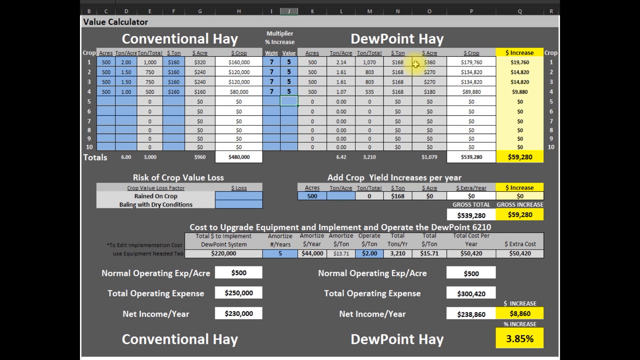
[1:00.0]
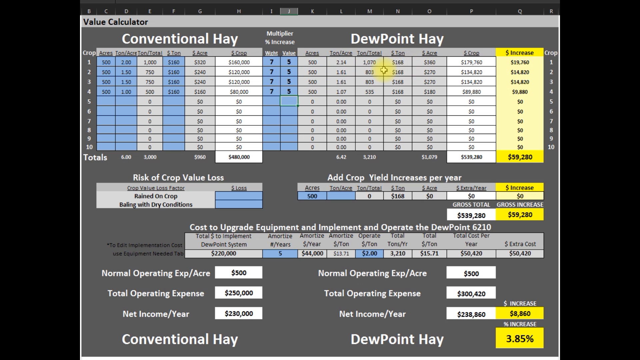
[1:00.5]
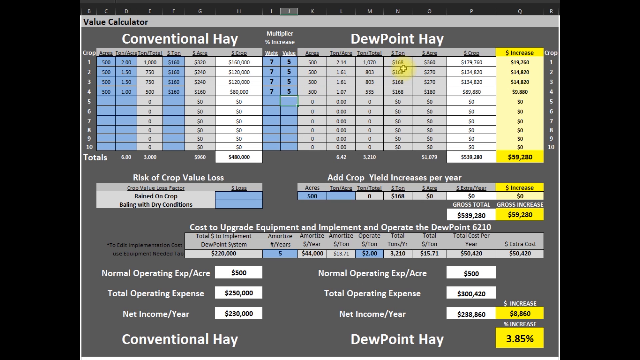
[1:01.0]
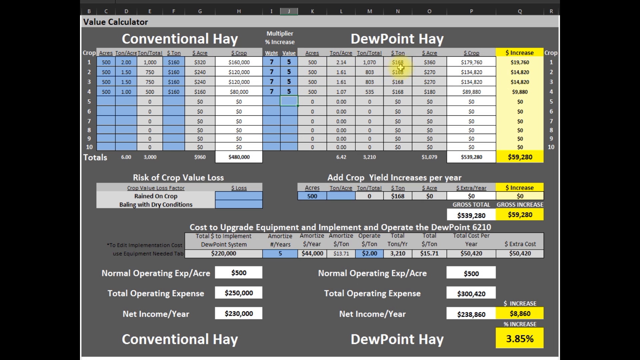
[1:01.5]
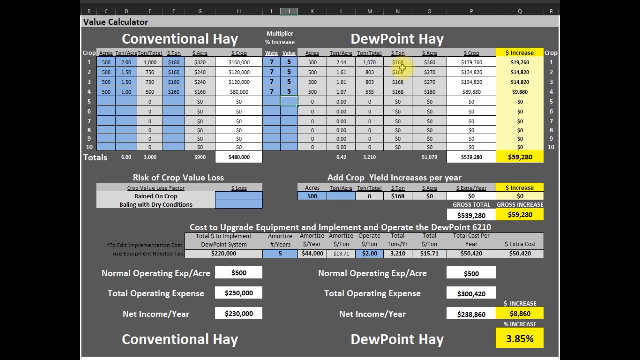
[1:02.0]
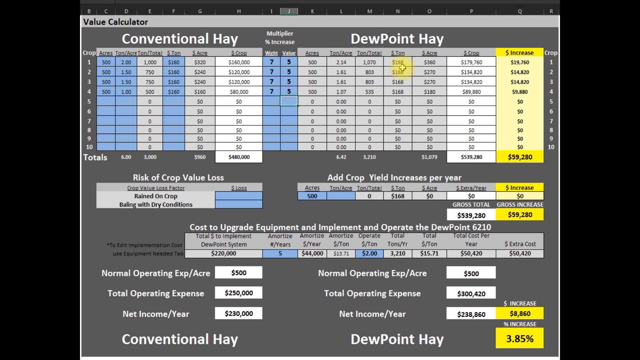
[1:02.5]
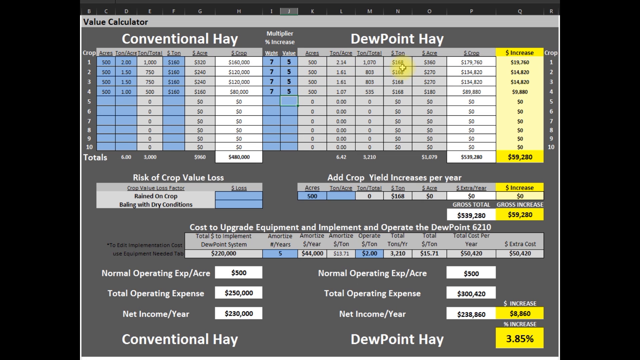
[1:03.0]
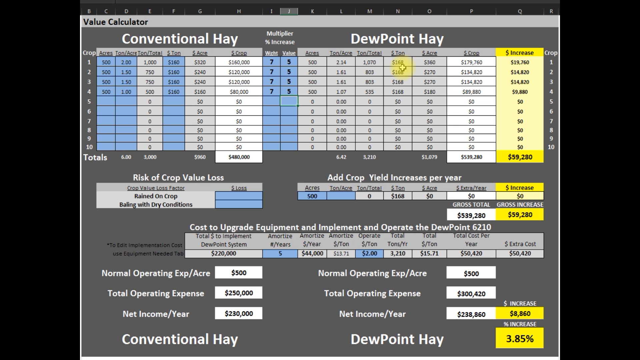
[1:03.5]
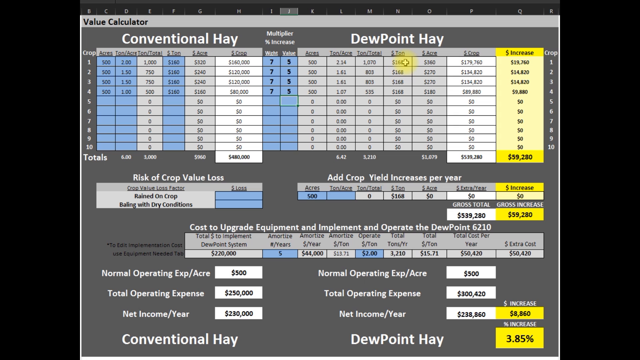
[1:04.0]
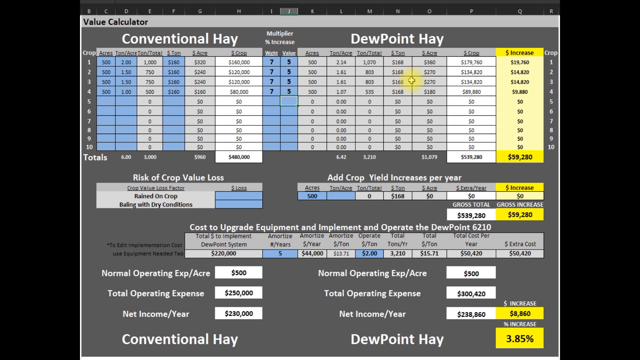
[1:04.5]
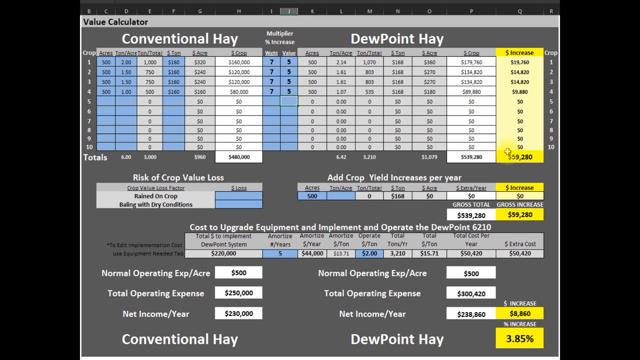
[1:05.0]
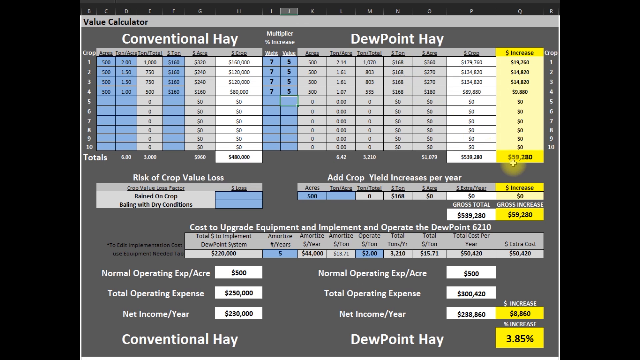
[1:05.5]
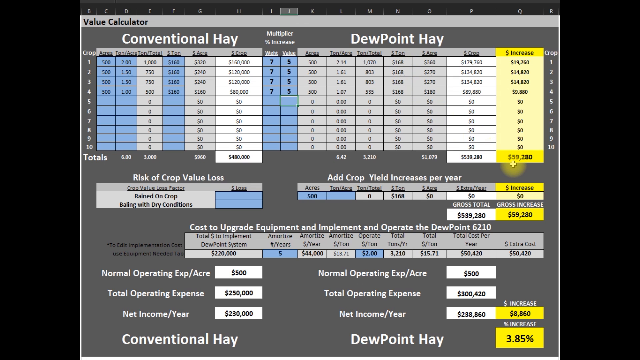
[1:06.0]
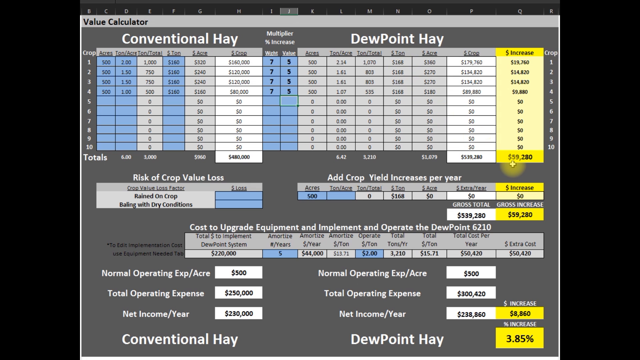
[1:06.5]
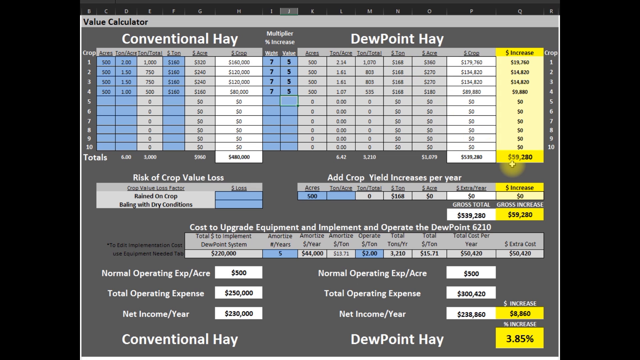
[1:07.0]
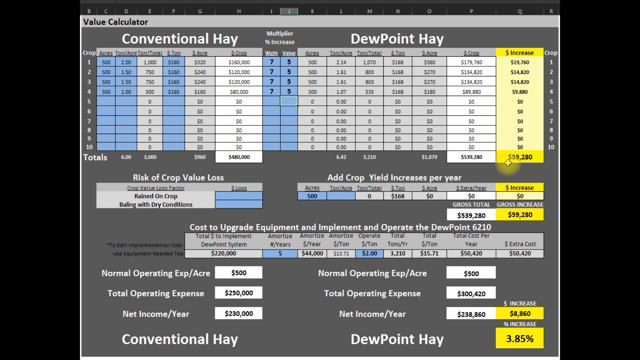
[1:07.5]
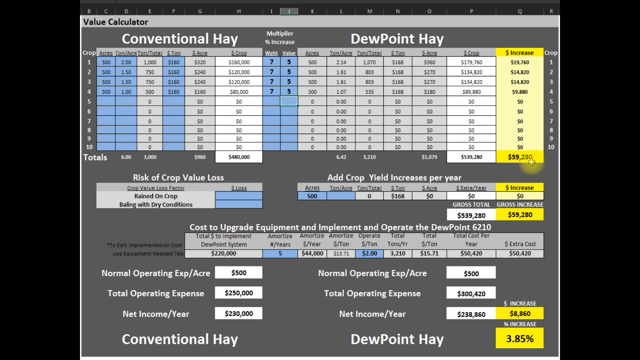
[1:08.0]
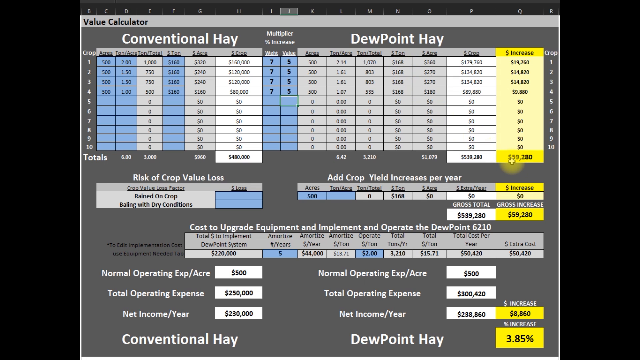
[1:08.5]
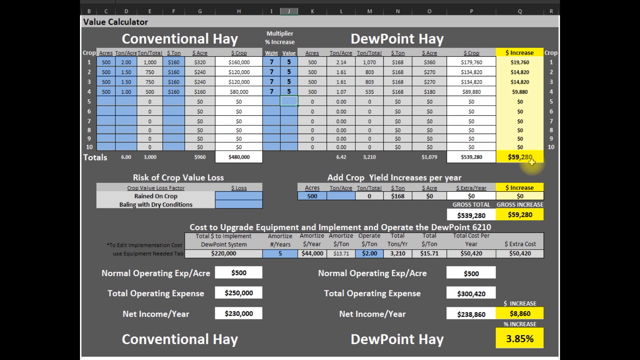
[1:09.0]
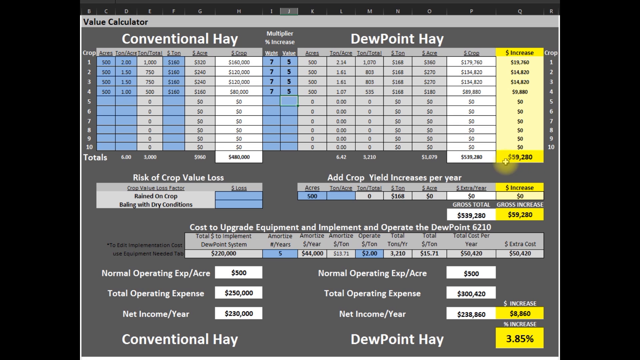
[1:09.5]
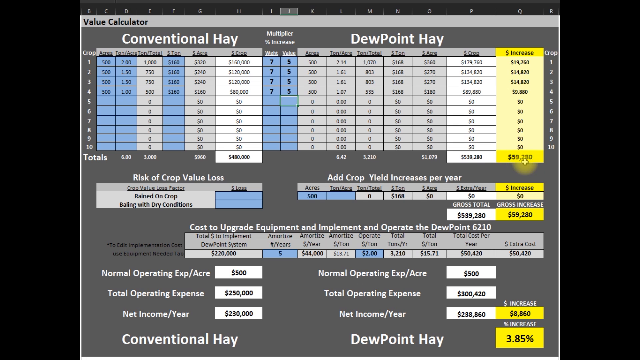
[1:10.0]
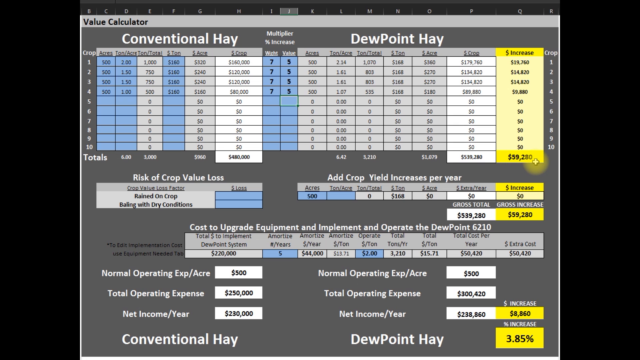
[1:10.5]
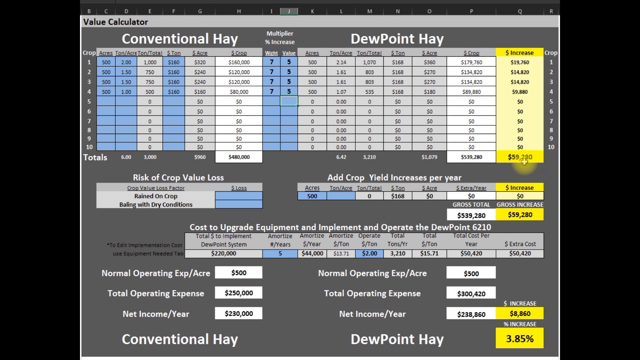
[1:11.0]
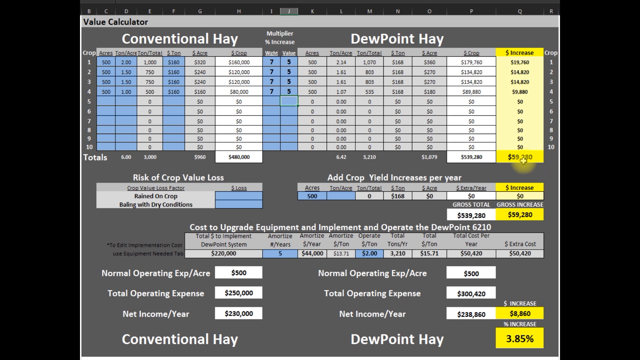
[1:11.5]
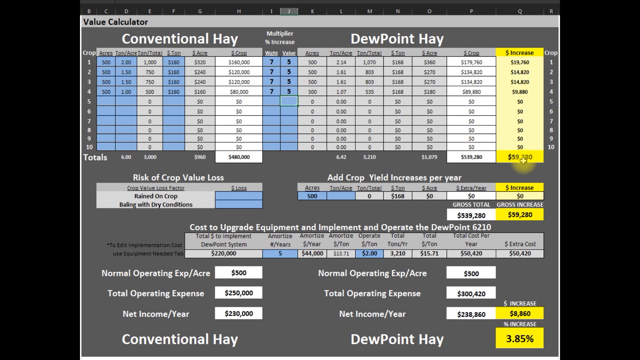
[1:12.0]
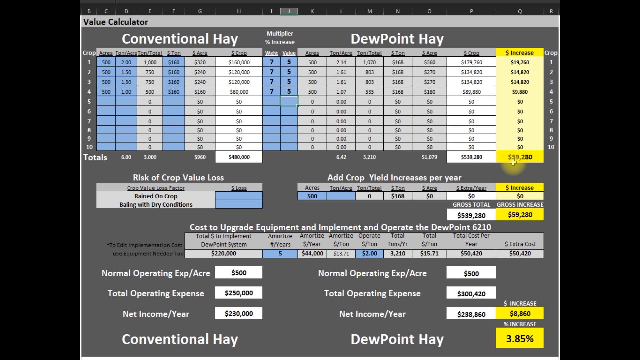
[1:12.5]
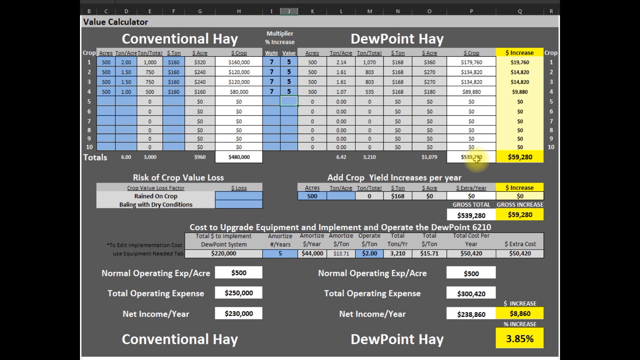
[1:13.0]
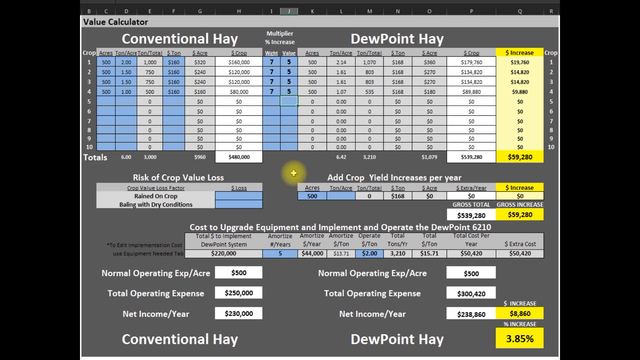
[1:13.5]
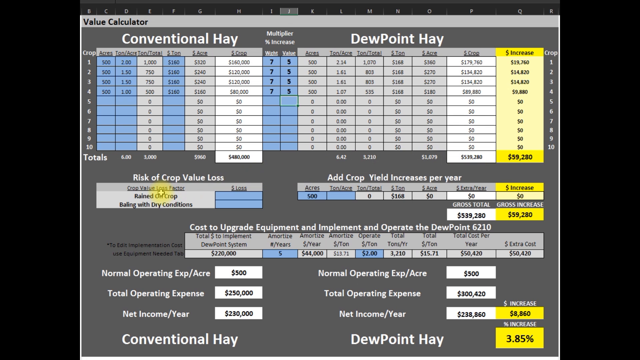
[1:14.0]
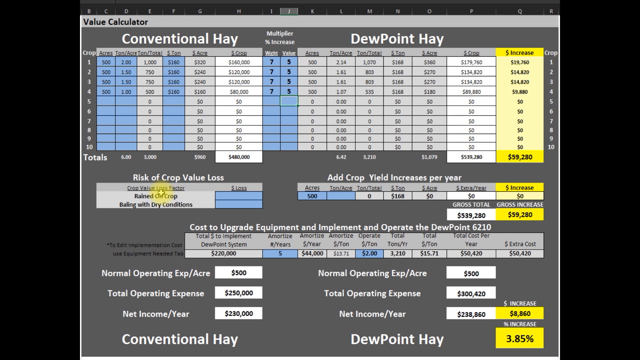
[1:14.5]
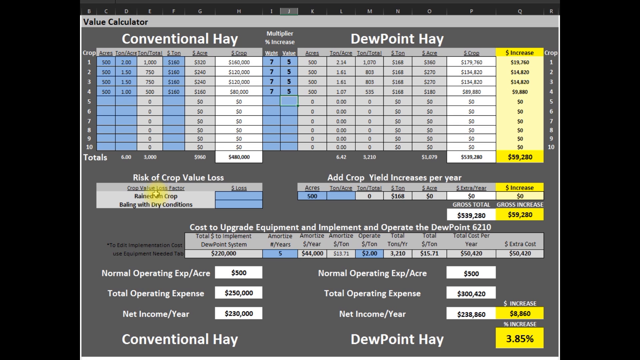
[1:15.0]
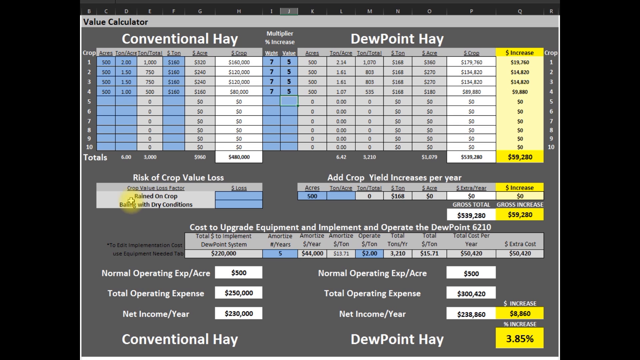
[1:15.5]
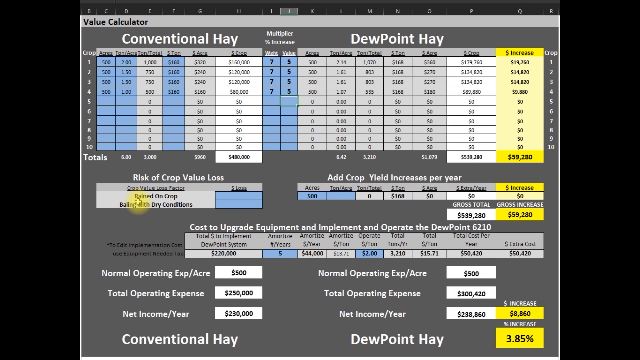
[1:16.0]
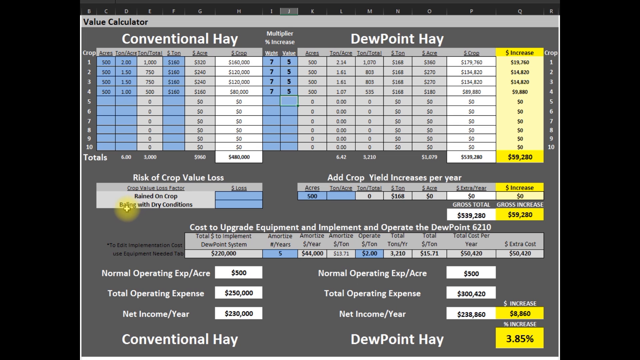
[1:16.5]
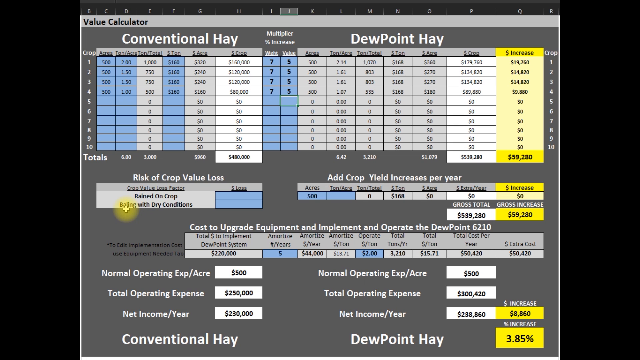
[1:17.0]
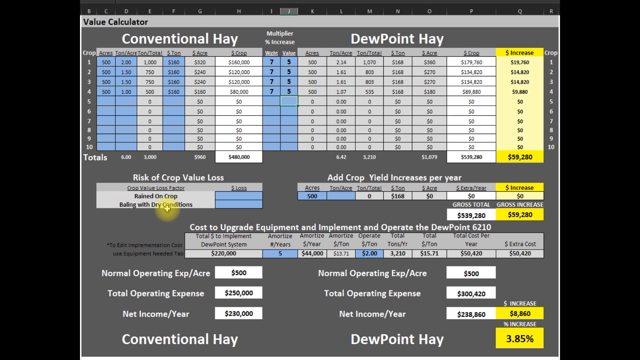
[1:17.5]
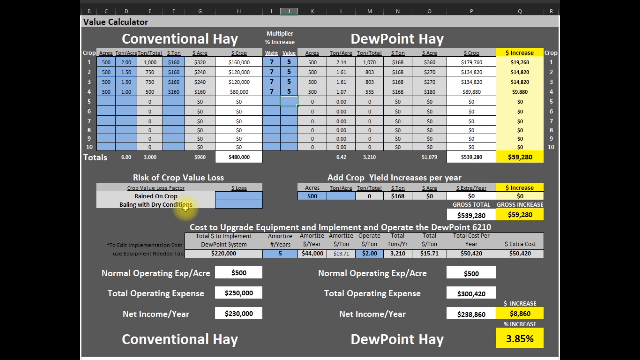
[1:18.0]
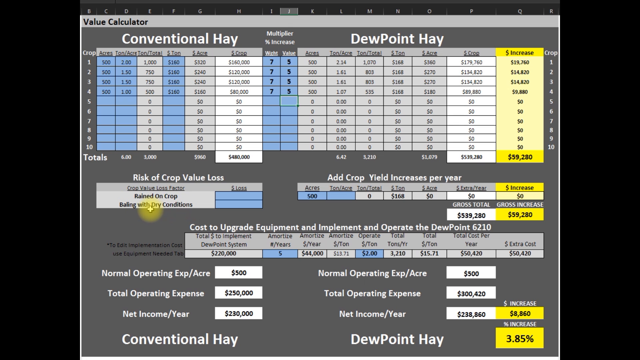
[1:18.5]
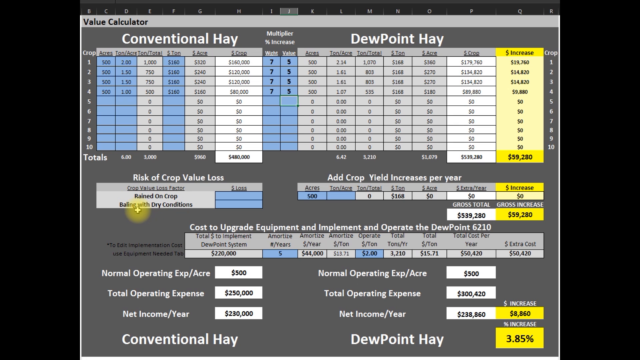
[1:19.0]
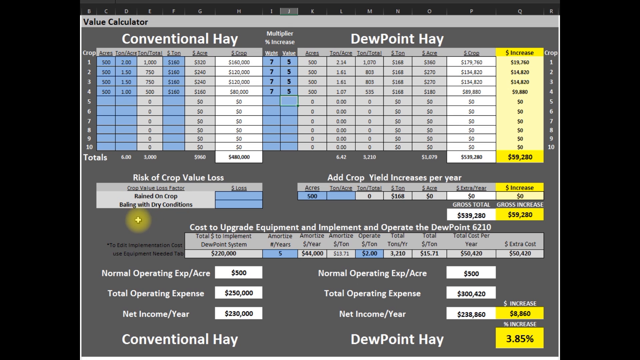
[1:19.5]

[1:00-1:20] The sheet, which looks like an Excel sheet, is titled "value calculator" in black. When the person types a number in certain areas, particularly in the blue part, numbers in other sections of the chart update, increasing or decreasing depending on the number typed, which apparently indicates formulas in some cells. Section titles are in white font: the upper left-hand one says "conventional hay", and the right one says "DEW point hay". Below them, the left says "risk of crop value loss" and the right says "add crop increase per year". Underneath that it says "cost to upgrade equipment, implement, and operate the" dew point, followed by either a euro sign or "6210". The person hovers over the different columns, goes to the left column, and then into the area called "risk of crop value loss", which has two sections whose small words are hard to read and become blurry when enlarged.